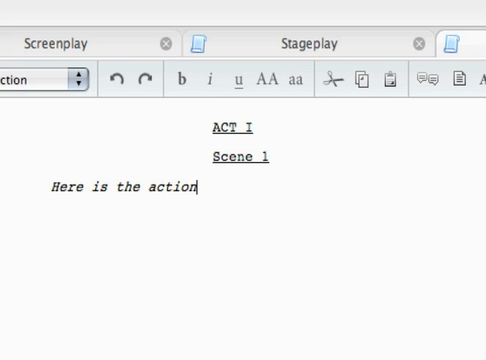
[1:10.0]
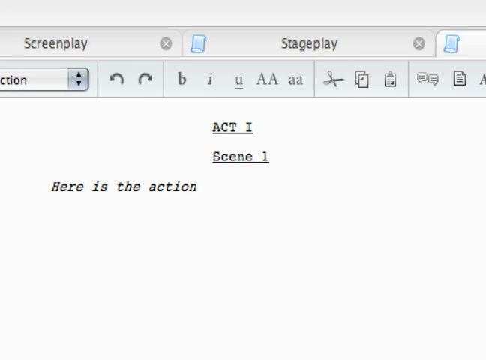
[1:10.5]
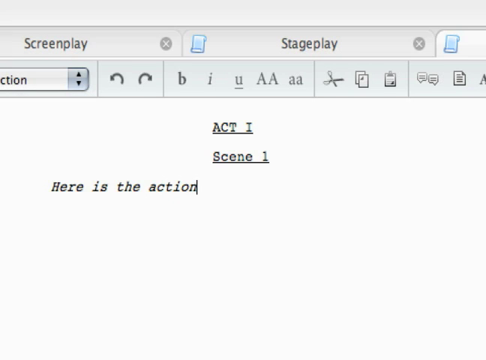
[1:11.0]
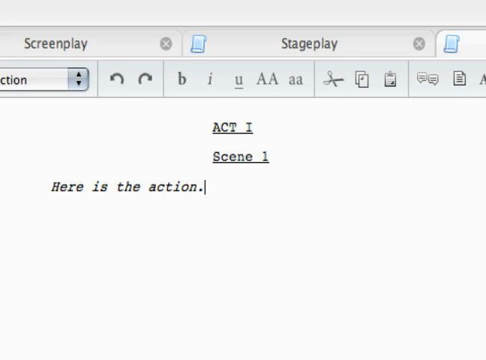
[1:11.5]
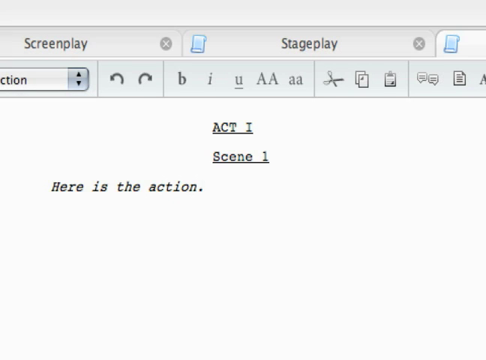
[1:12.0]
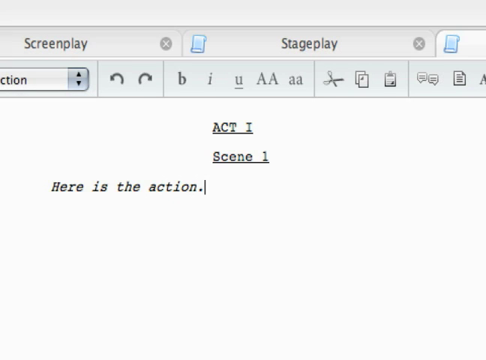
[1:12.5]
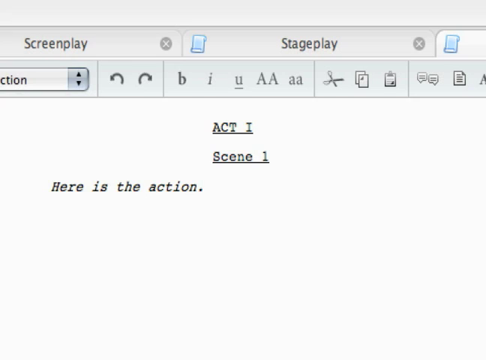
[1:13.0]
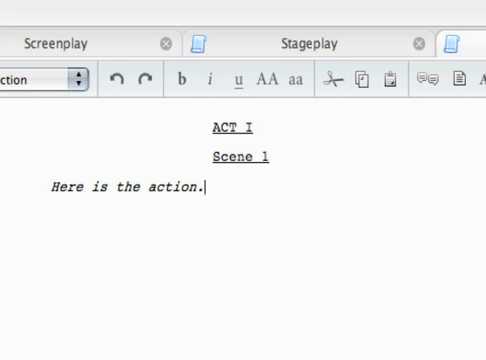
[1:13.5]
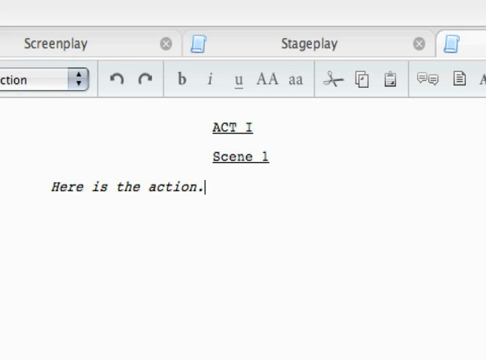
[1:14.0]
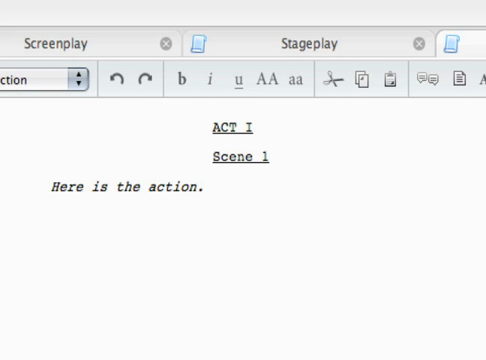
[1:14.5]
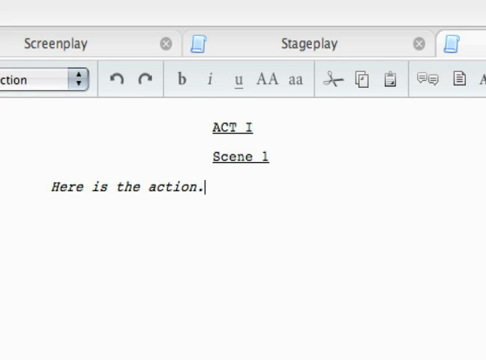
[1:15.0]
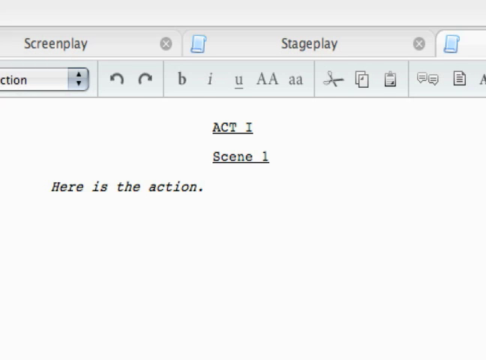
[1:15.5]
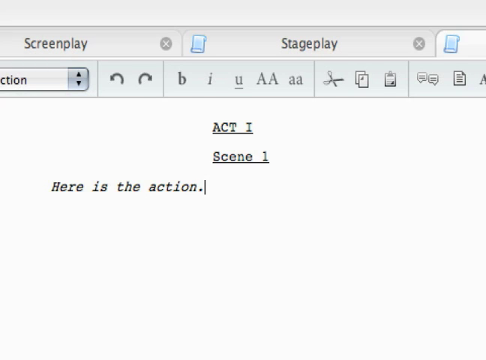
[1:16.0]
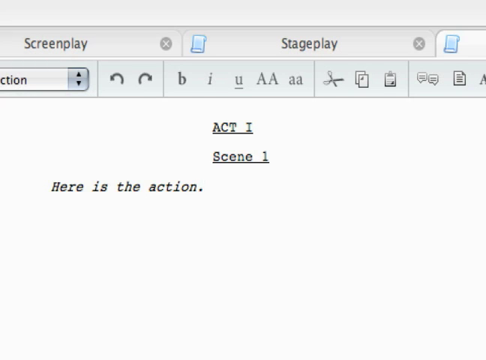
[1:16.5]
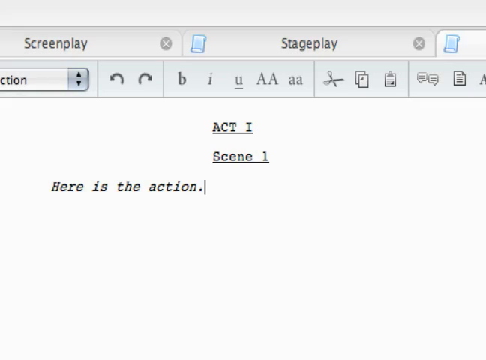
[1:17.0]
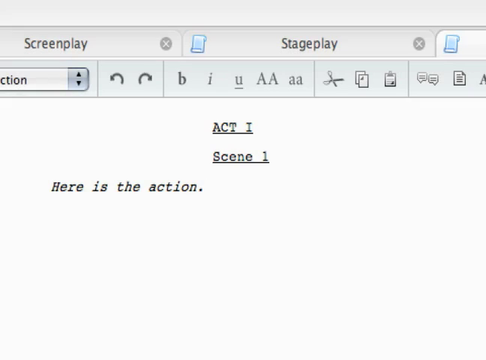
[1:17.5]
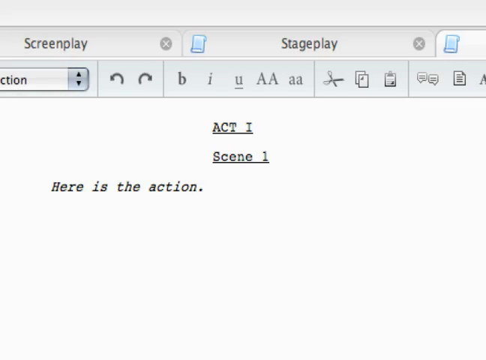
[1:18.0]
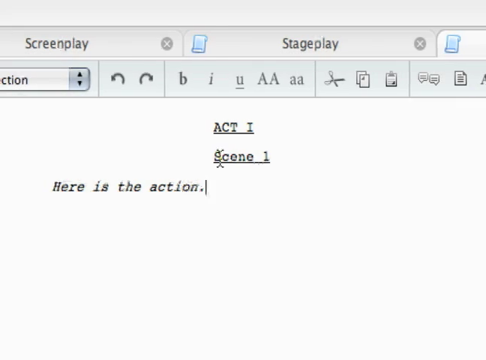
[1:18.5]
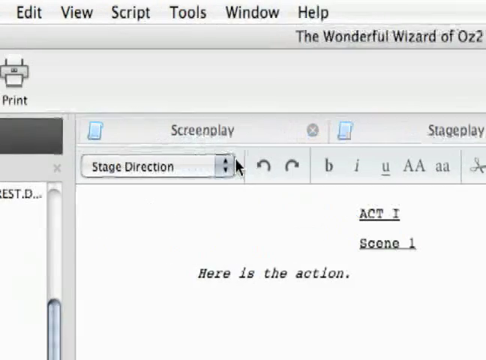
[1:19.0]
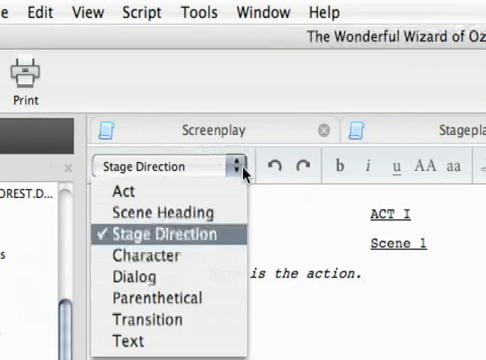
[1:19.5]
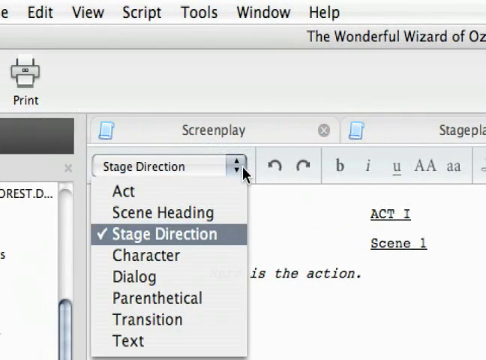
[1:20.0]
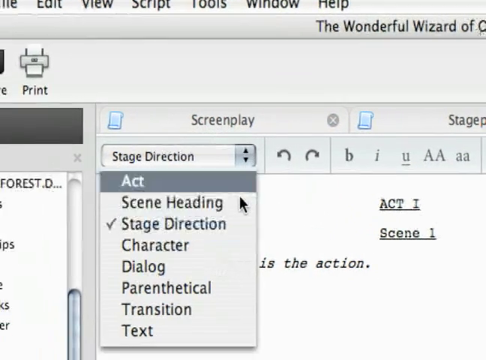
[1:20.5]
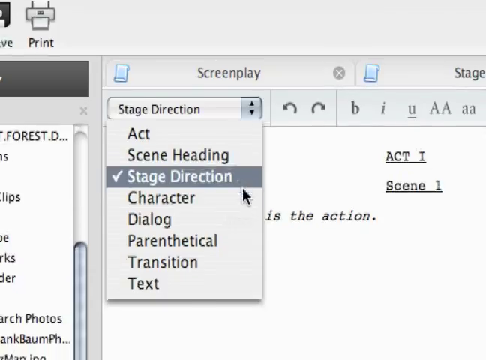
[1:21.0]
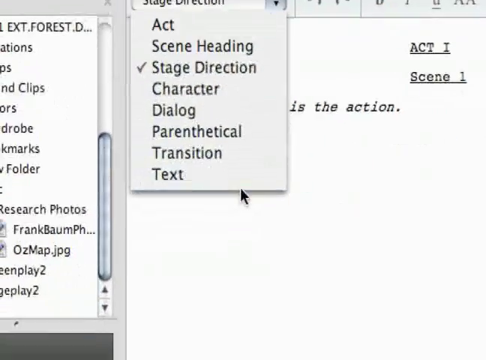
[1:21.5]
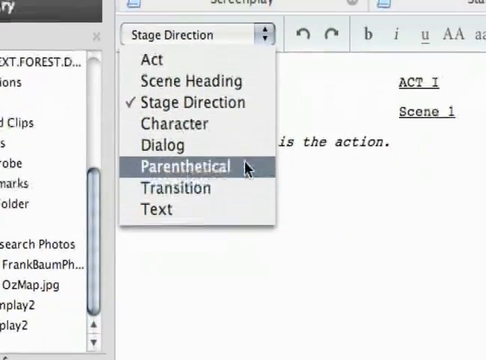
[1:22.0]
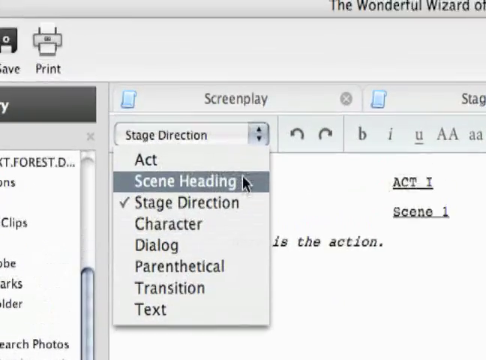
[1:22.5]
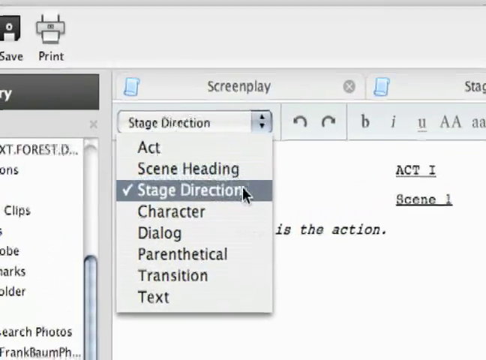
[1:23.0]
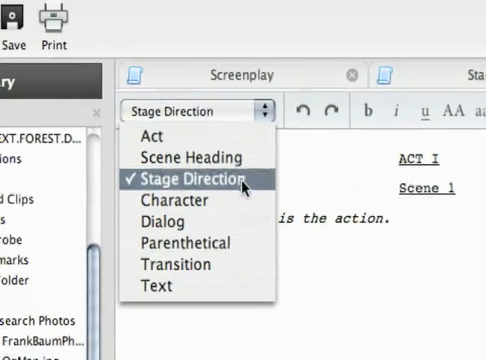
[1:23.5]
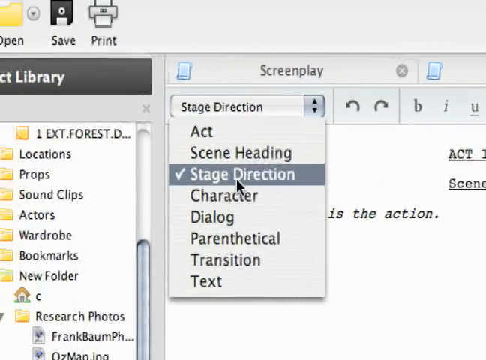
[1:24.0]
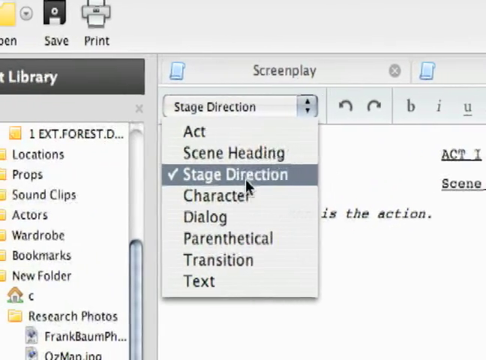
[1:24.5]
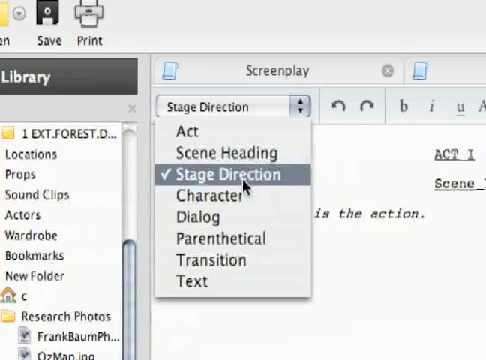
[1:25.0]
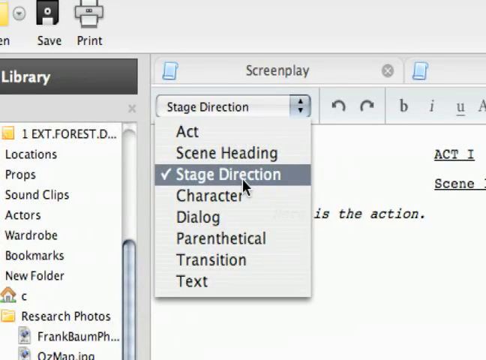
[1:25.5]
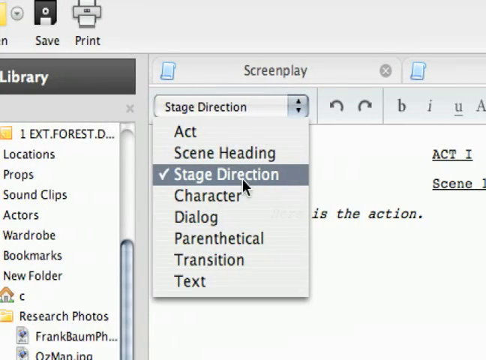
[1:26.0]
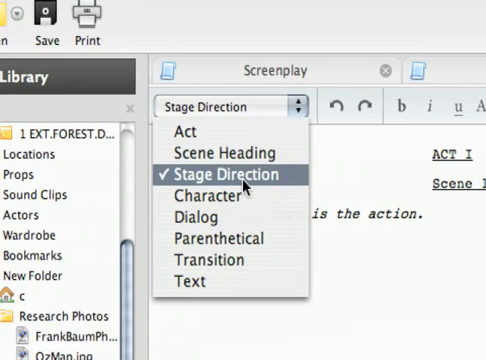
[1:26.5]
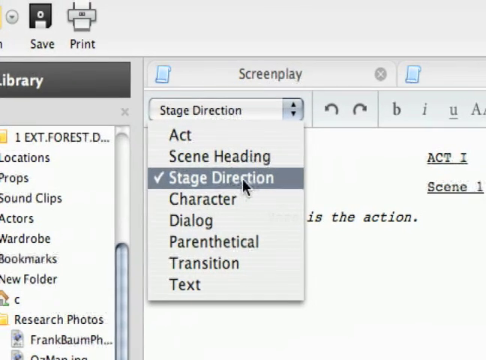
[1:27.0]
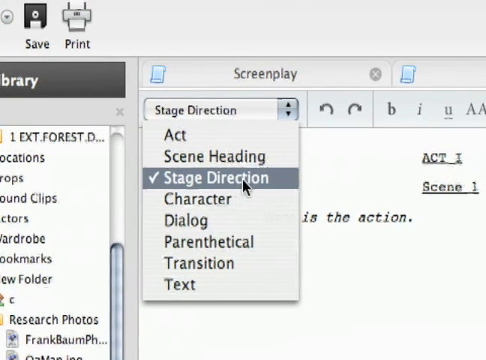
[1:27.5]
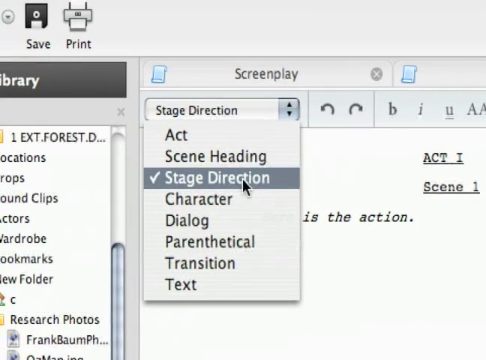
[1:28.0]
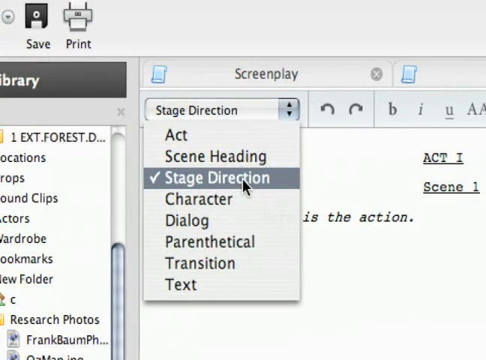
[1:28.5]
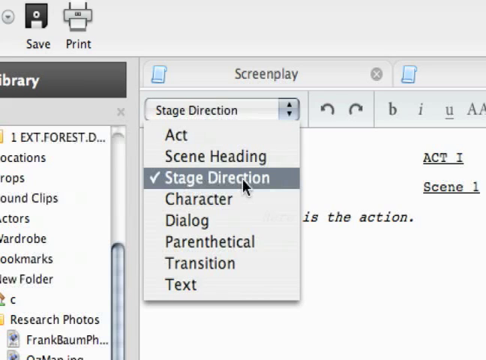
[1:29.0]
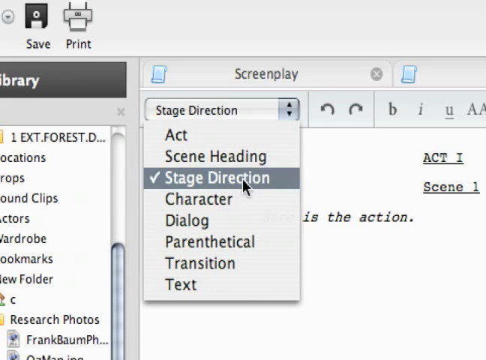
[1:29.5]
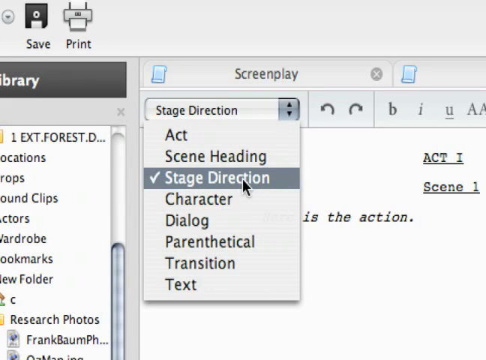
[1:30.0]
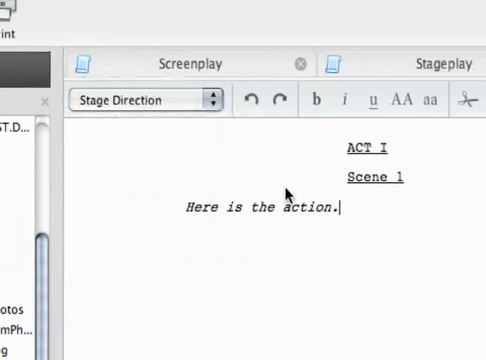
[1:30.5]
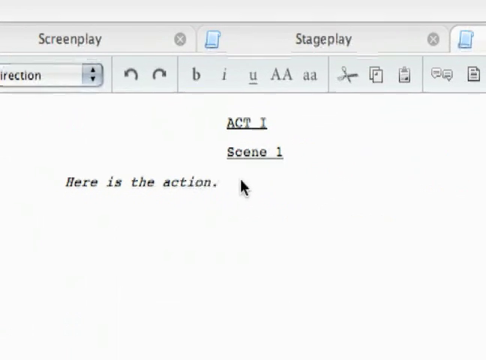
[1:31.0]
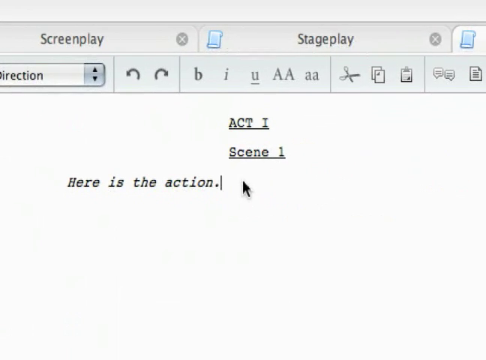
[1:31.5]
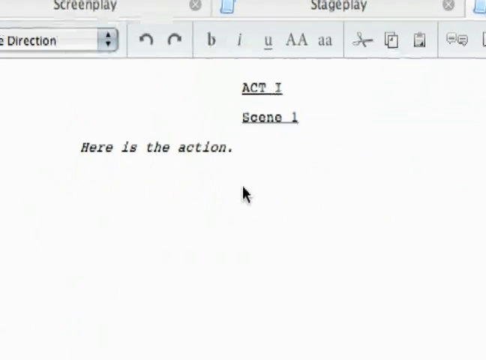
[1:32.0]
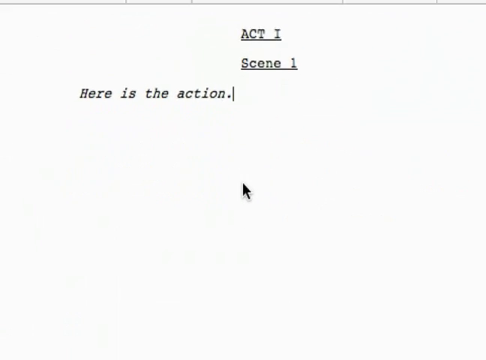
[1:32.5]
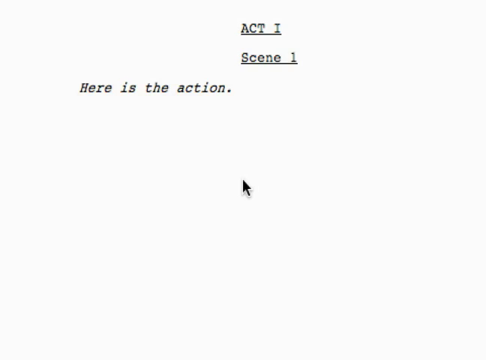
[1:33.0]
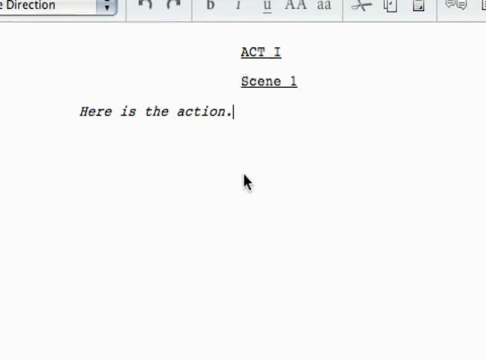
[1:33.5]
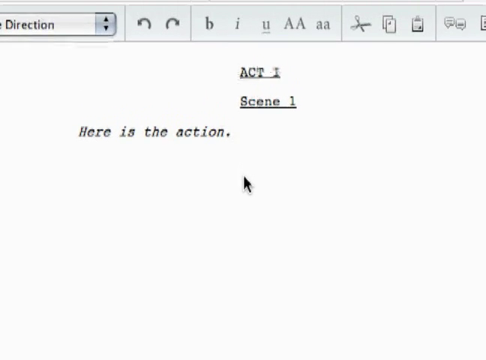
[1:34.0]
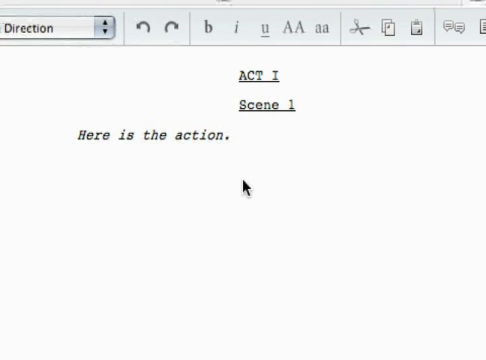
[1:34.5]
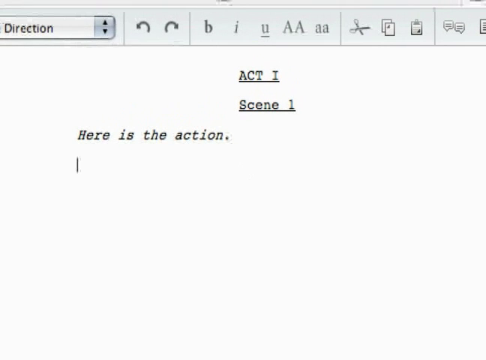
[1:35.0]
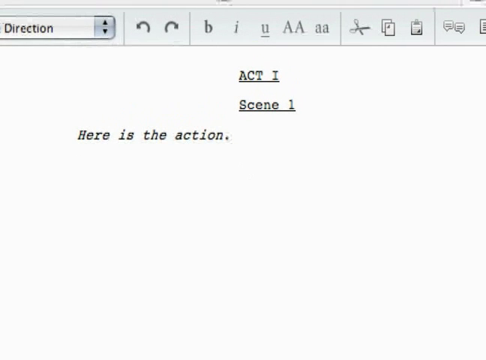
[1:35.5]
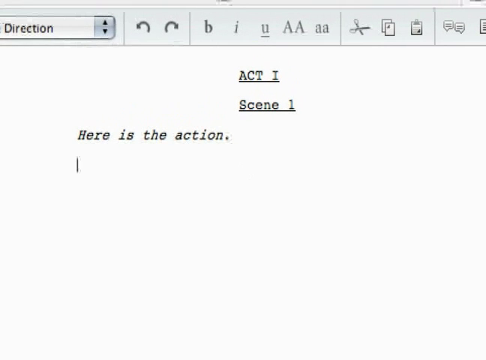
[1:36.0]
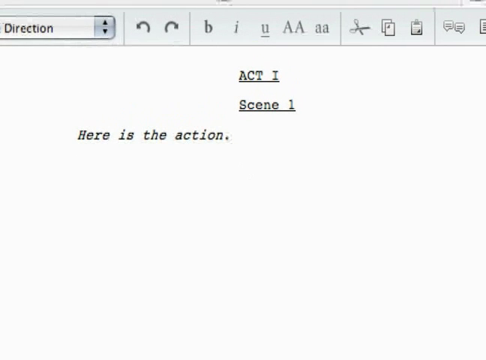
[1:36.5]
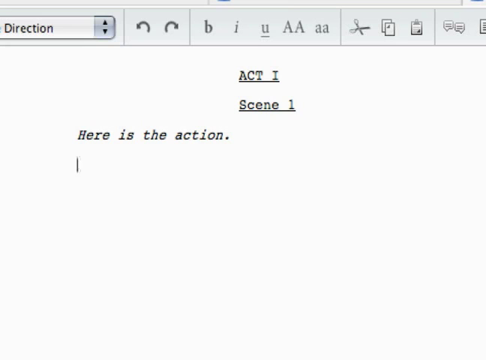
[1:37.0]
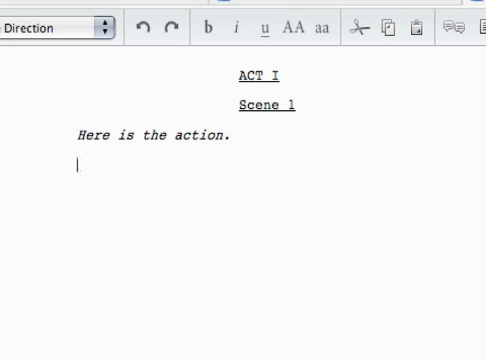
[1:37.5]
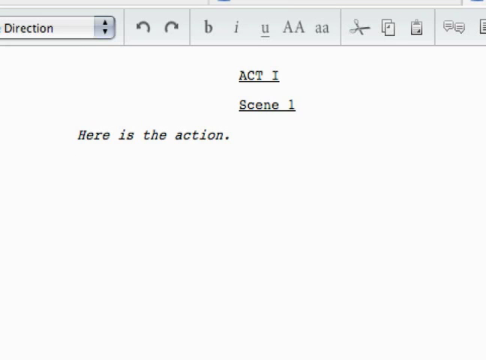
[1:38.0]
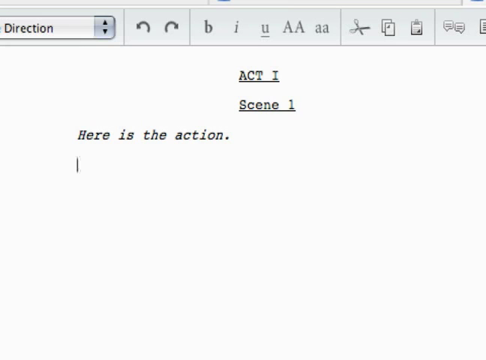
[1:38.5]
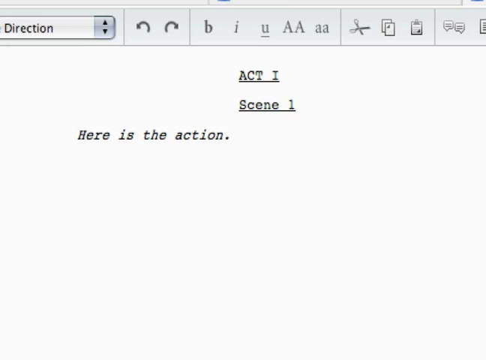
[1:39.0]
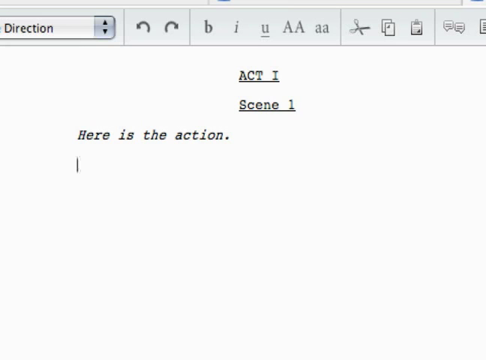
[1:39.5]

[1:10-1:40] A period is added to the end of the sentence "here is the action", and the cursor blinks at the end of it for about 5 seconds. The cursor moves up and to the left to a collapsible tab to the left of the undo and redo buttons, which unfurls into a small window listing Act, Scene Heading, Stage Direction, Character, Dialogue, Parenthetical, Transition and Text. Stage Direction is currently selected, highlighted in dark gray with a checkmark on the left. The cursor scrolls down to the bottom of that window and back up, hovers over the highlighted Stage Direction option and clicks it. The view returns to the blank document, moves down and then up, and the flashing text entry bar appears underneath the first sentence.